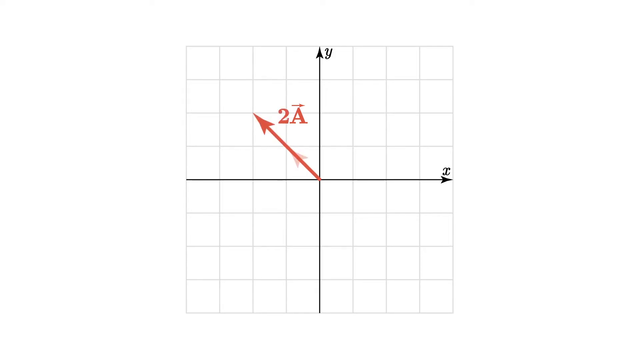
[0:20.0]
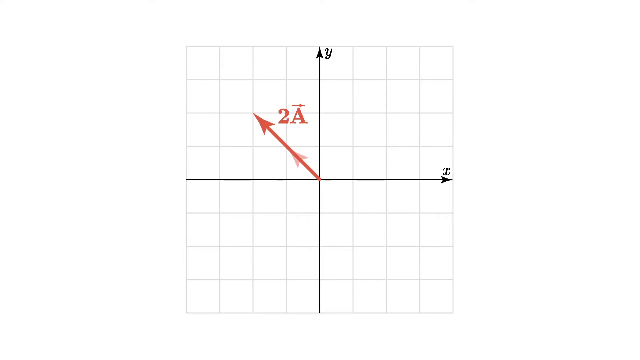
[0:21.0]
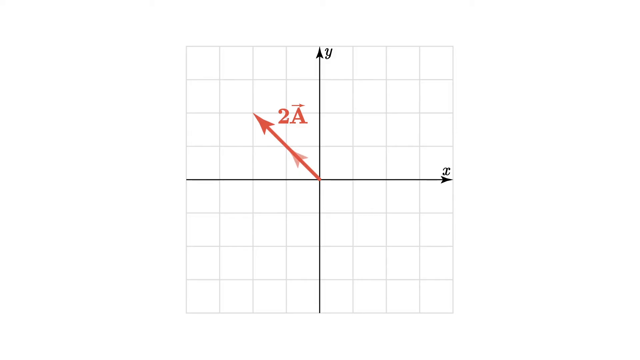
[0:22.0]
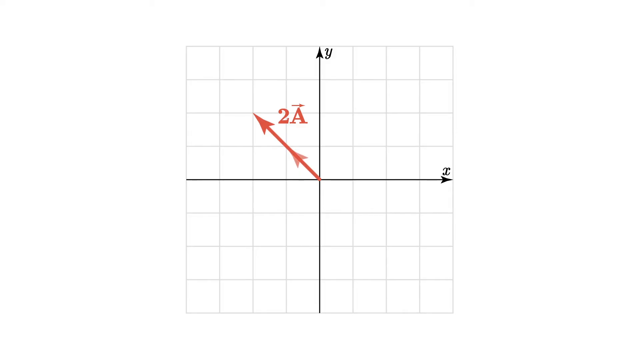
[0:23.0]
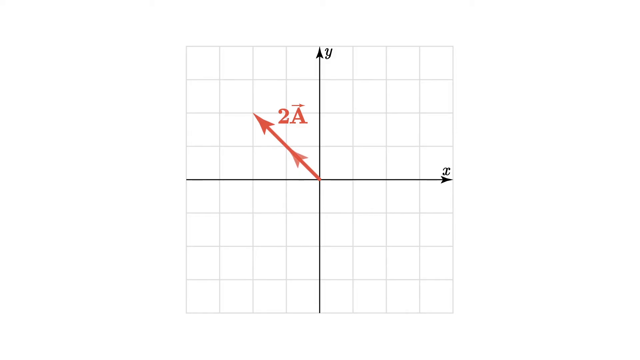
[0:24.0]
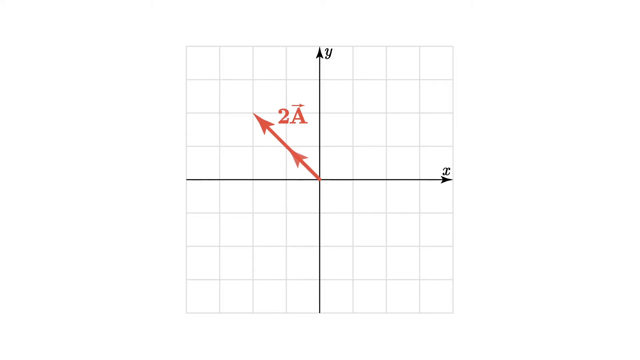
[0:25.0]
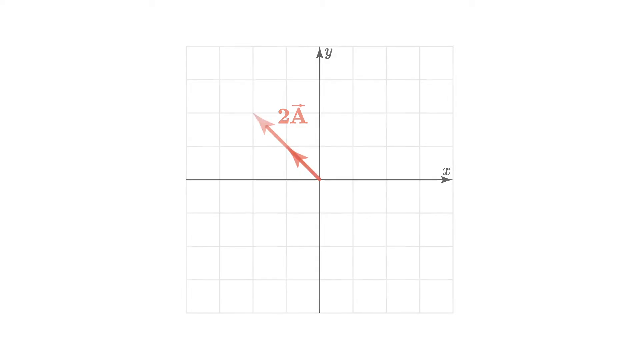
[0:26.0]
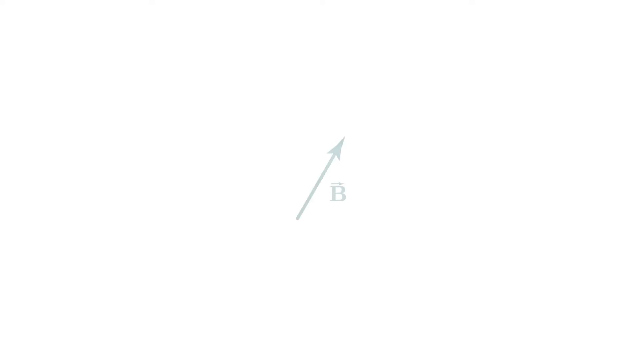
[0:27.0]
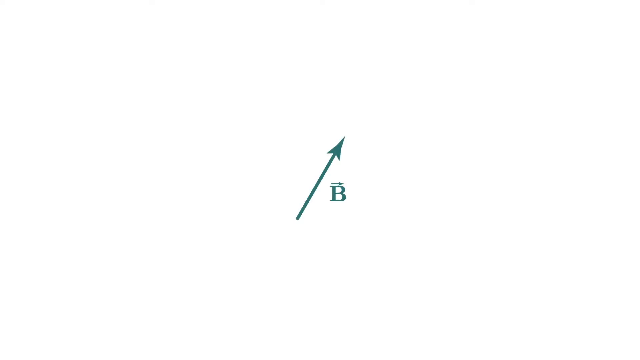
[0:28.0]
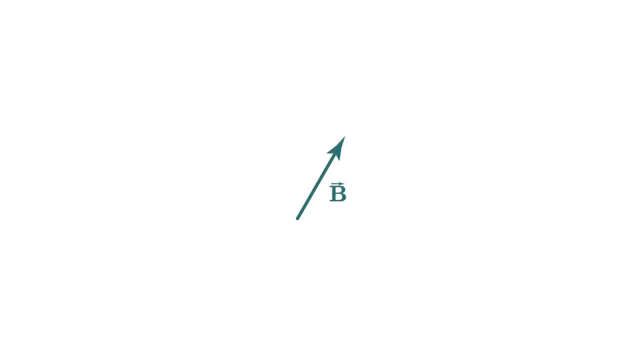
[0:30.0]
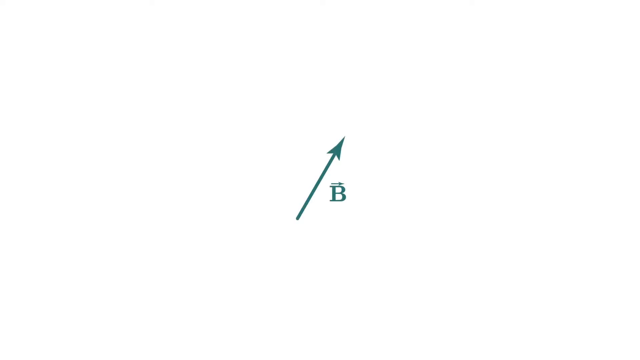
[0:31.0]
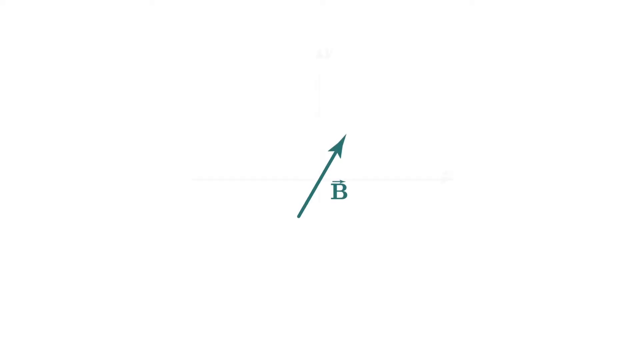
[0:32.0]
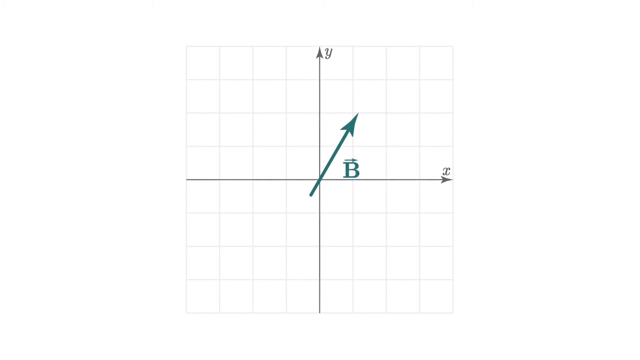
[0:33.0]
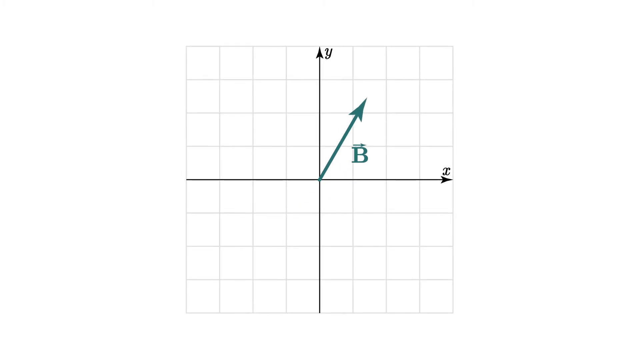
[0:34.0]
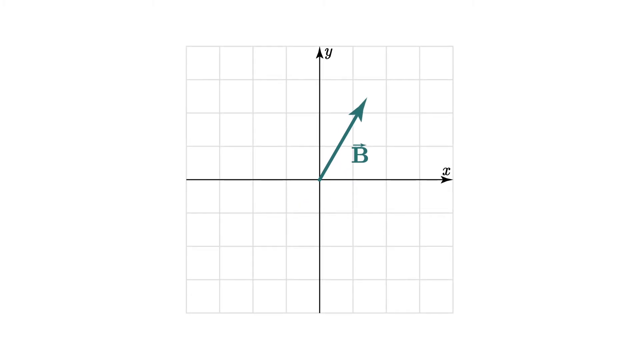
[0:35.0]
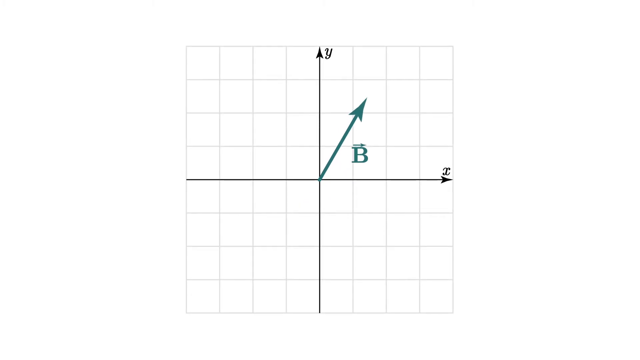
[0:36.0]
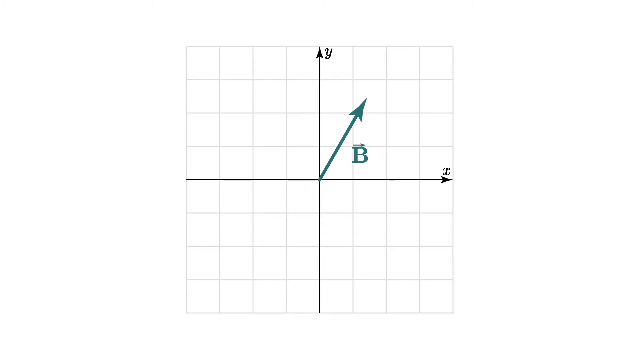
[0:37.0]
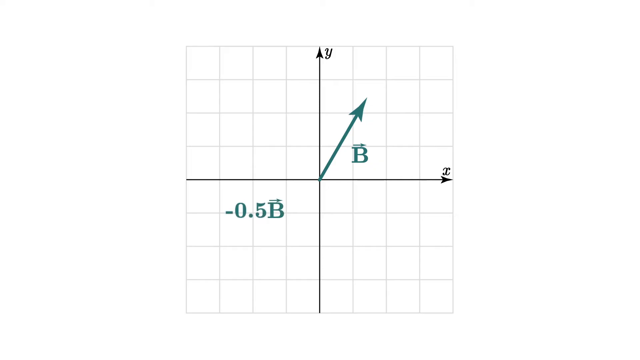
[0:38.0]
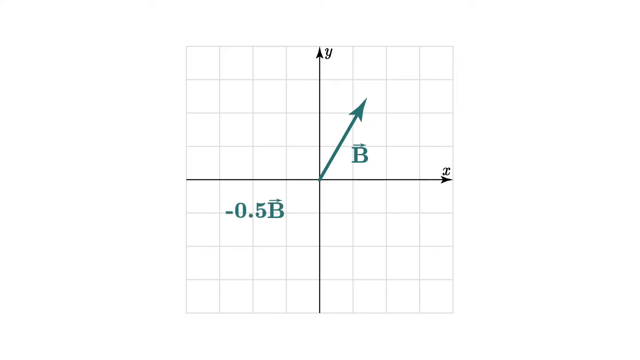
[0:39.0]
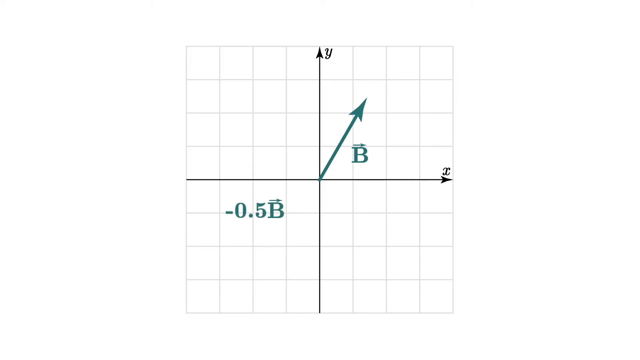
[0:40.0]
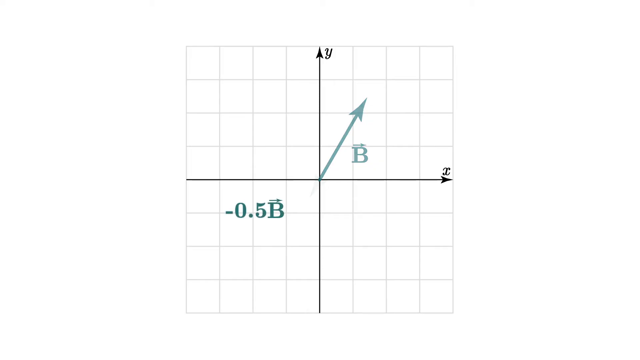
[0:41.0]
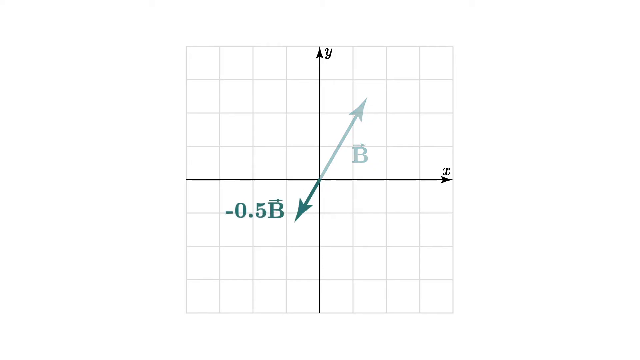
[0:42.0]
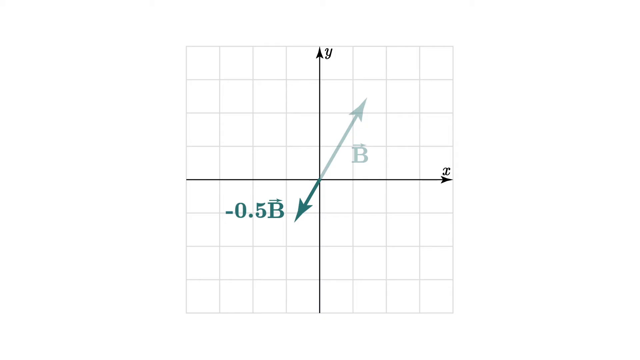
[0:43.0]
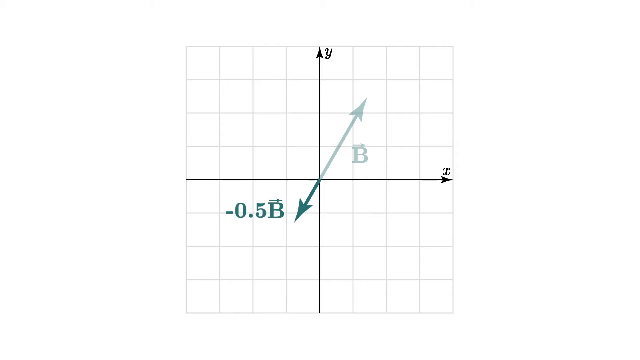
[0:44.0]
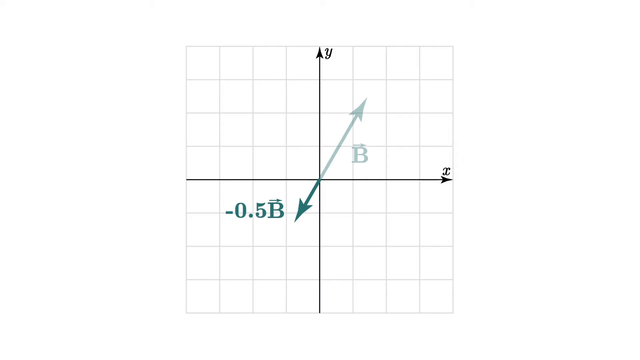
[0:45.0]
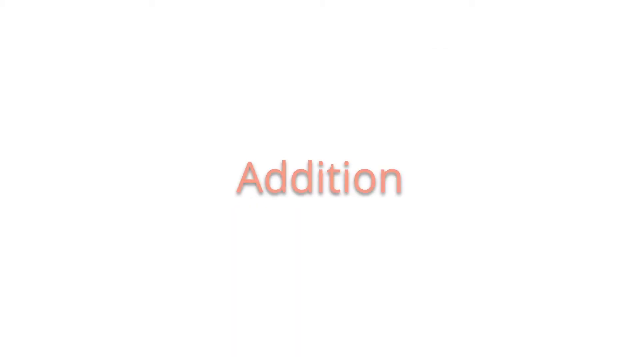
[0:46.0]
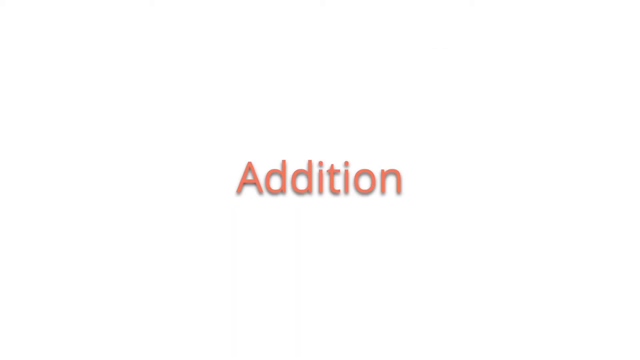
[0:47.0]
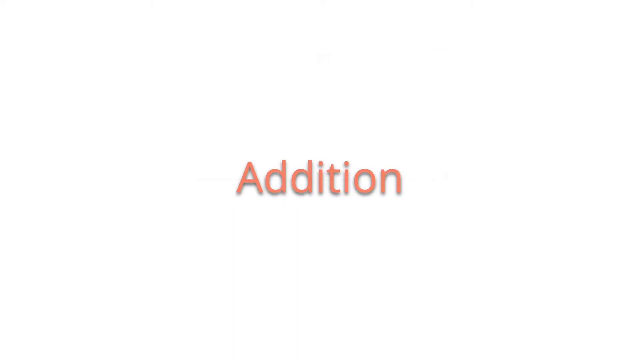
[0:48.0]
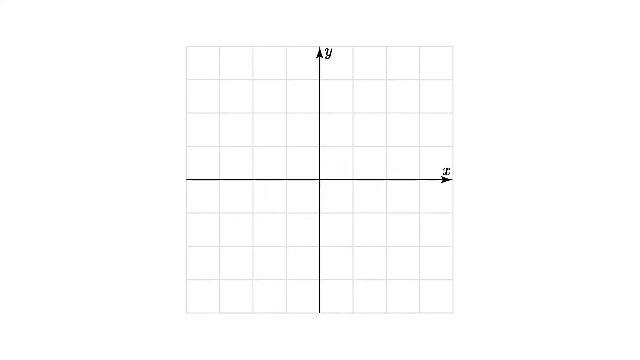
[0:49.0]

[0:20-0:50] This science video, called Vectors, shows an X and Y axis on grid paper eight squares across and eight squares down. In the negative section of the X and Y, a rust-colored arrow comes diagonally from the first square, labeled "2A"; the capital A appears to have an arrow above it going to the right. The arrow disappears, then the whole grid disappears. In the middle of the screen there is a teal arrow going diagonally to the right and a capital B with a small arrow above it going straight to the right. The B arrow then goes diagonally into the positive side of the first box, between X and Y. Suddenly a teal "negative .5" with a capital B and an arrow appears between the X and Y axes in the negative part of the X.